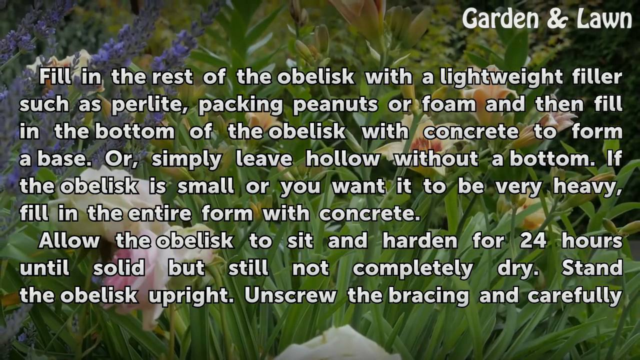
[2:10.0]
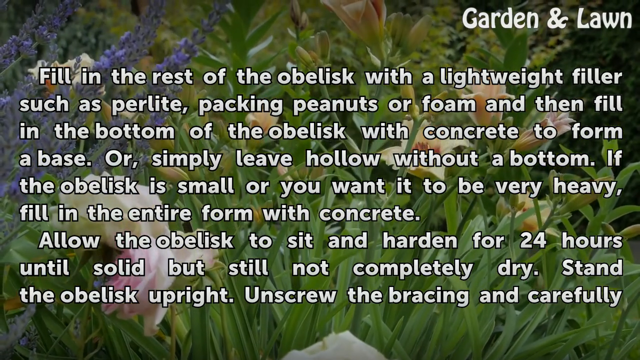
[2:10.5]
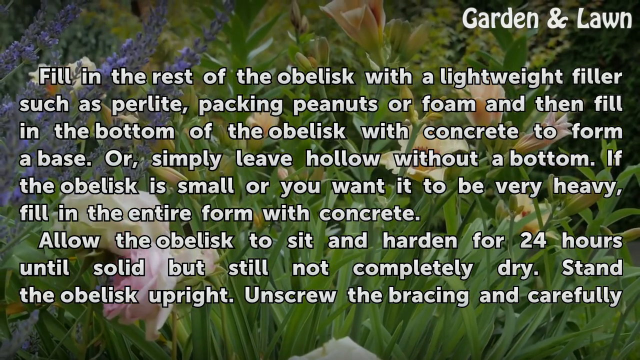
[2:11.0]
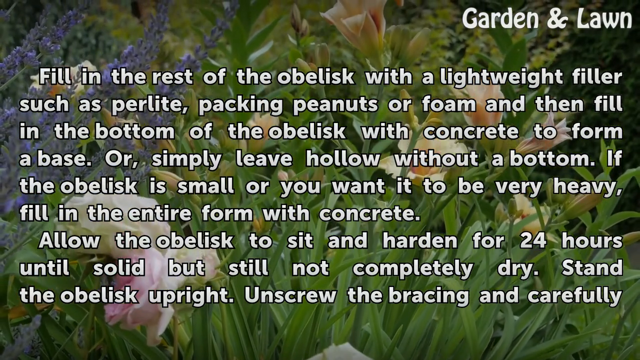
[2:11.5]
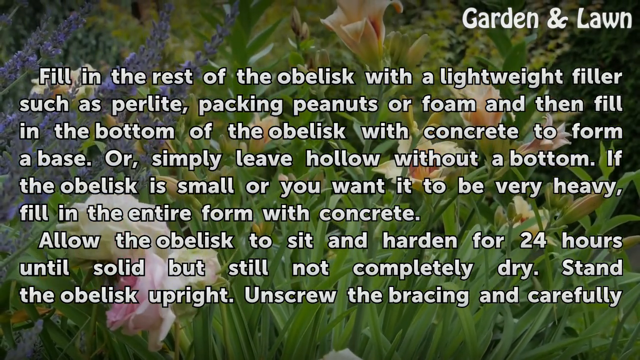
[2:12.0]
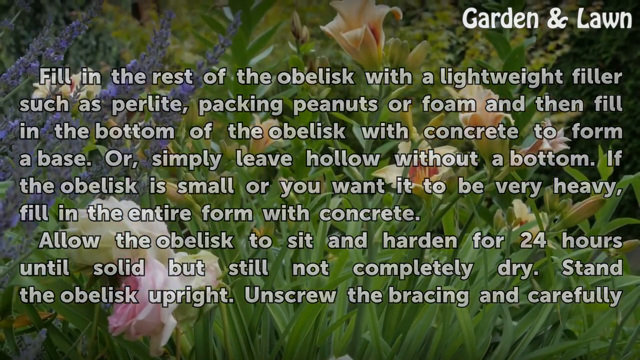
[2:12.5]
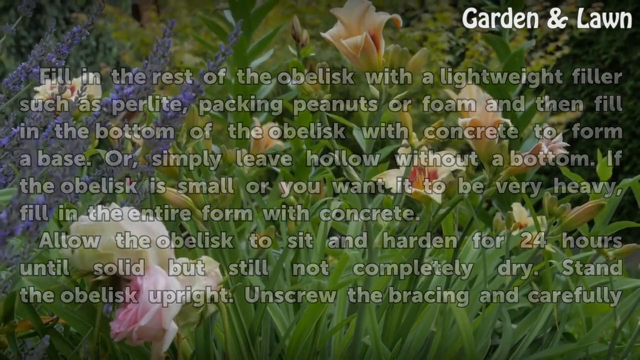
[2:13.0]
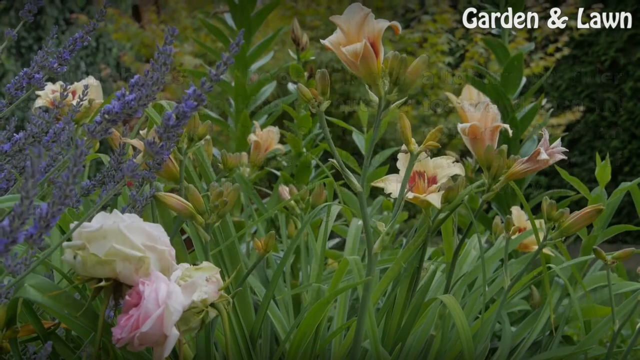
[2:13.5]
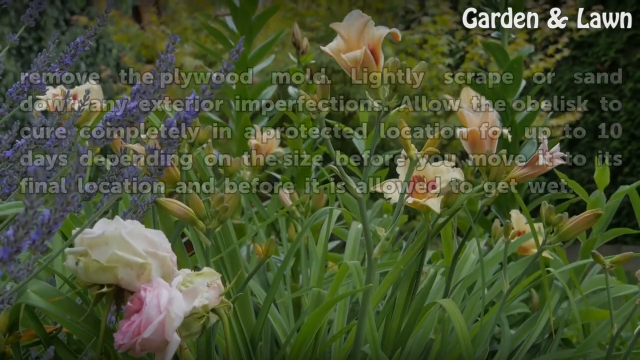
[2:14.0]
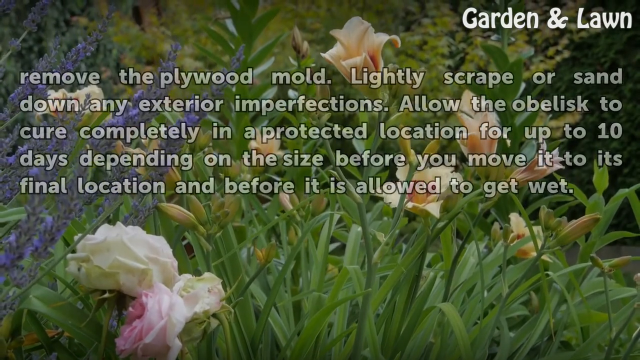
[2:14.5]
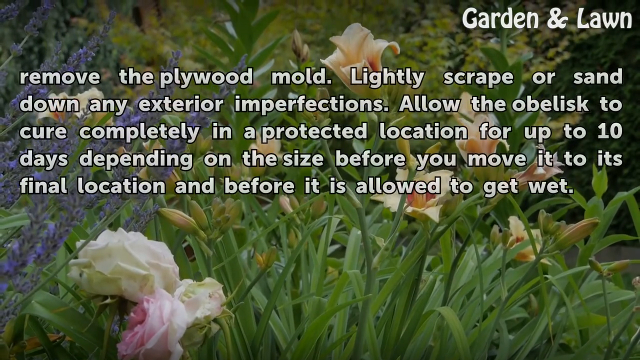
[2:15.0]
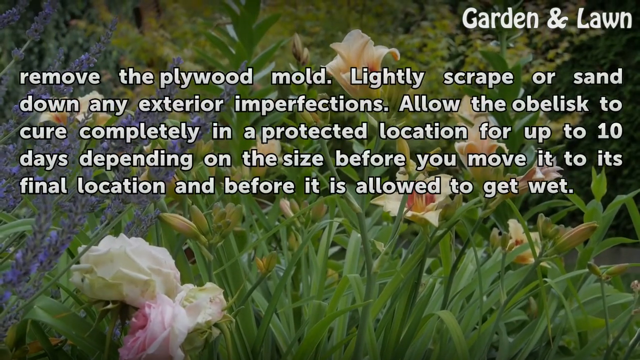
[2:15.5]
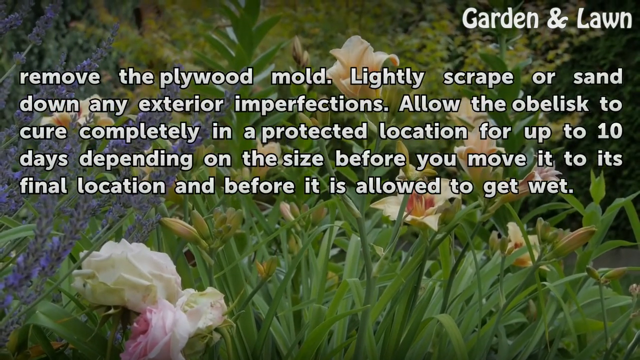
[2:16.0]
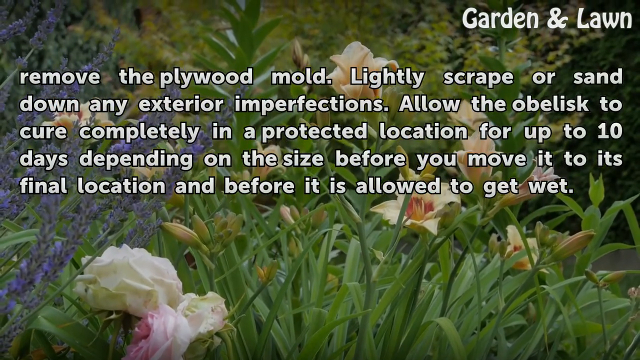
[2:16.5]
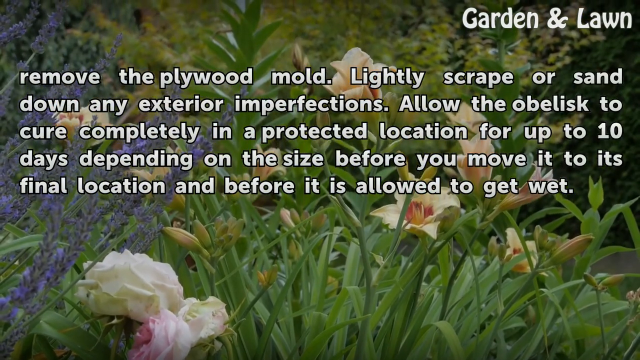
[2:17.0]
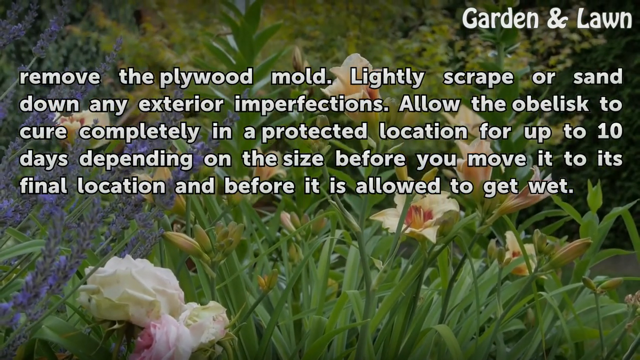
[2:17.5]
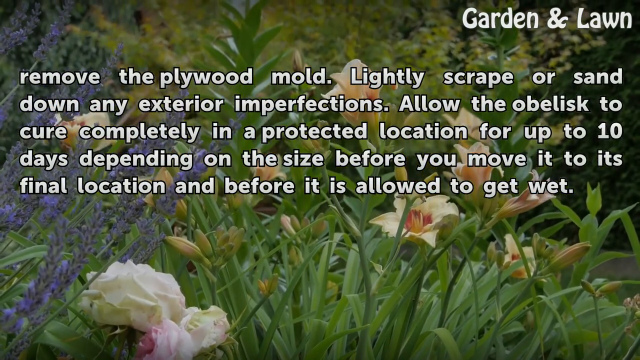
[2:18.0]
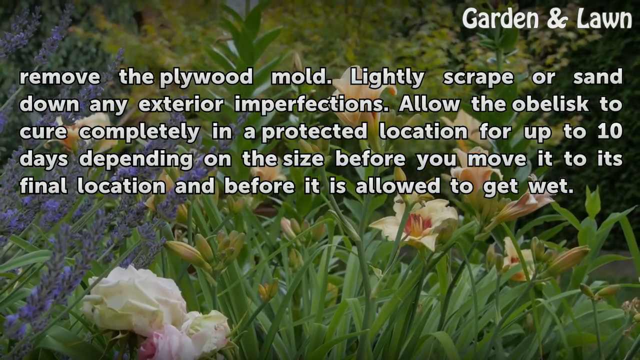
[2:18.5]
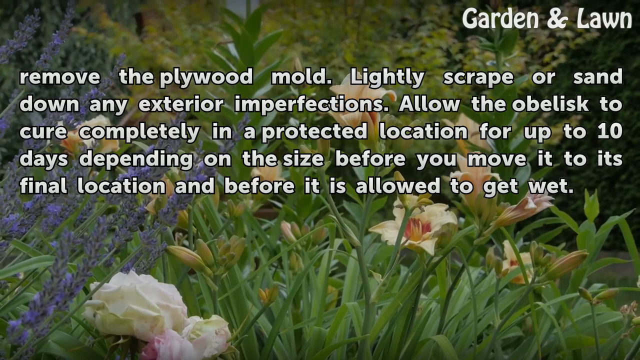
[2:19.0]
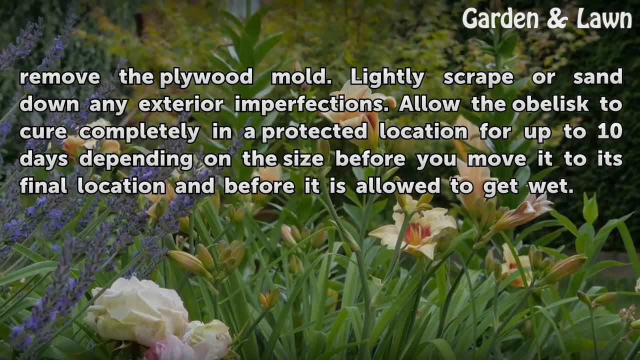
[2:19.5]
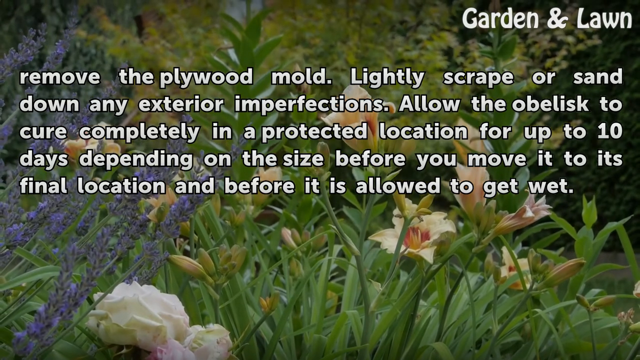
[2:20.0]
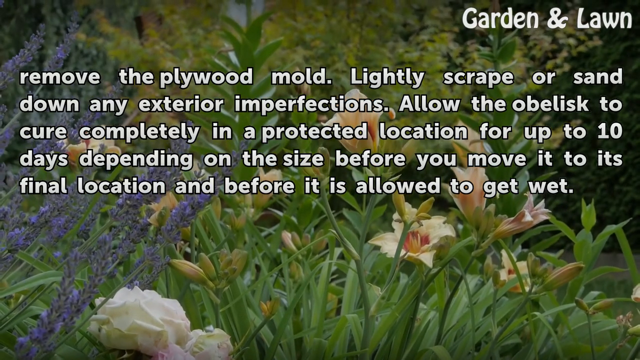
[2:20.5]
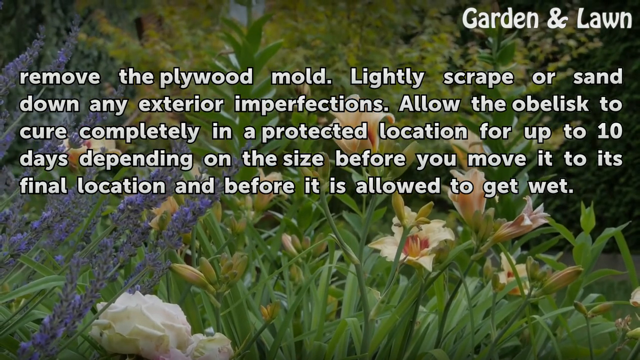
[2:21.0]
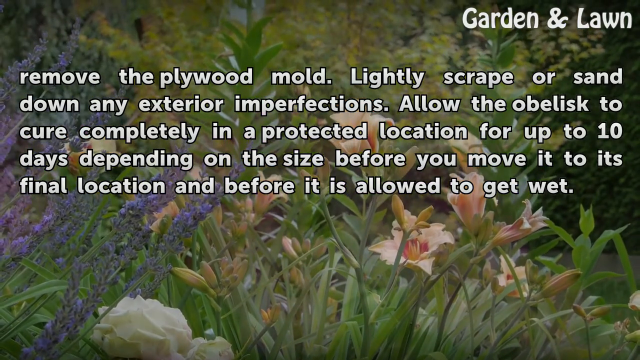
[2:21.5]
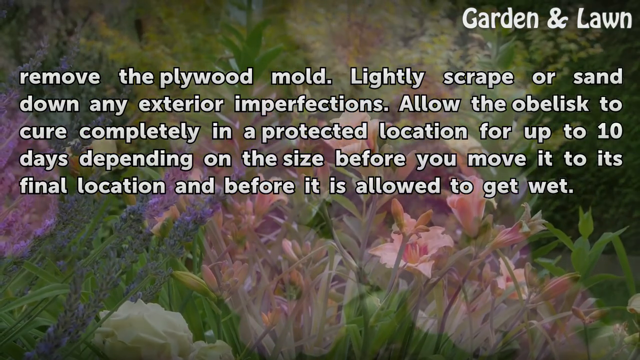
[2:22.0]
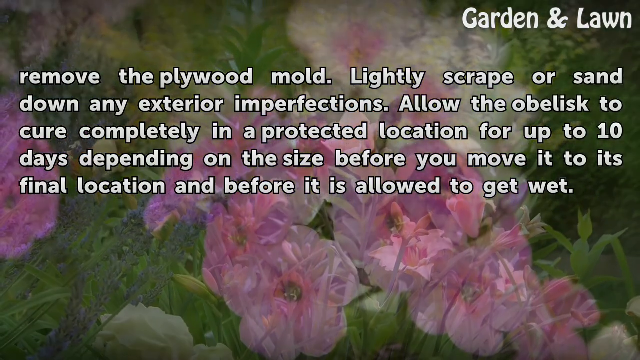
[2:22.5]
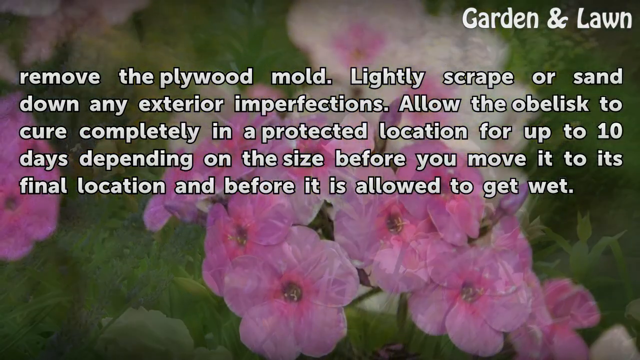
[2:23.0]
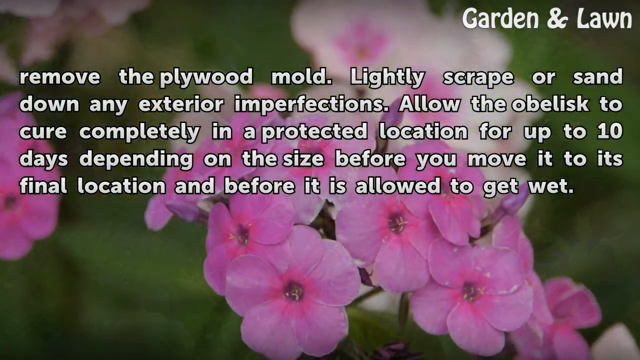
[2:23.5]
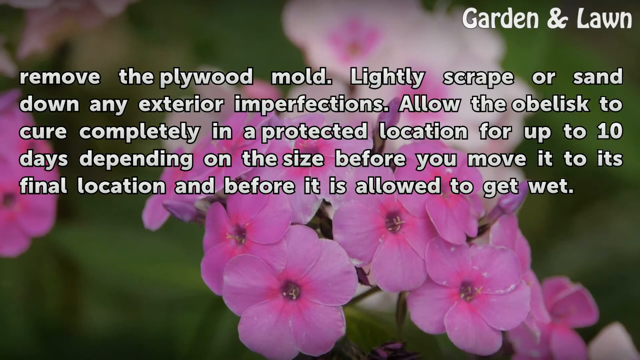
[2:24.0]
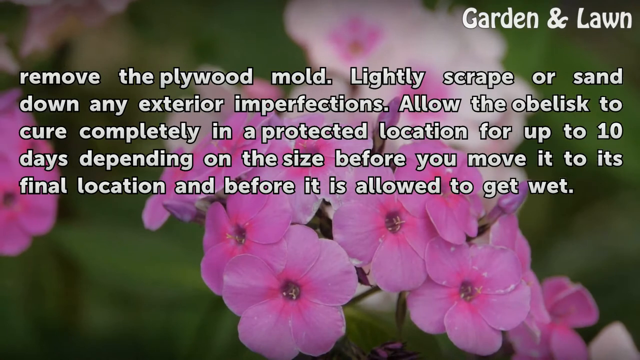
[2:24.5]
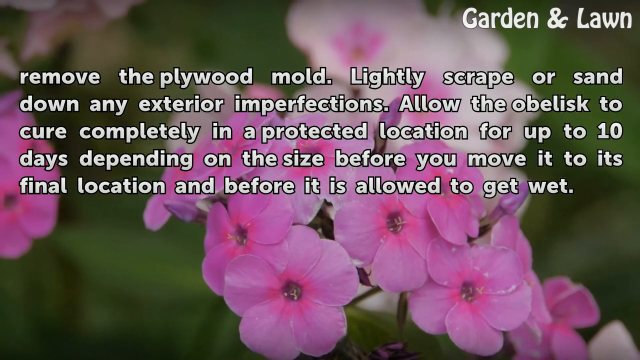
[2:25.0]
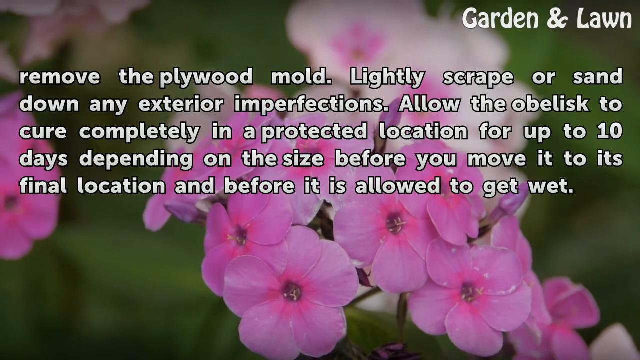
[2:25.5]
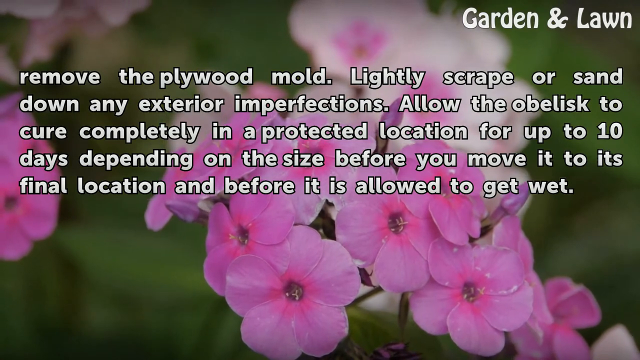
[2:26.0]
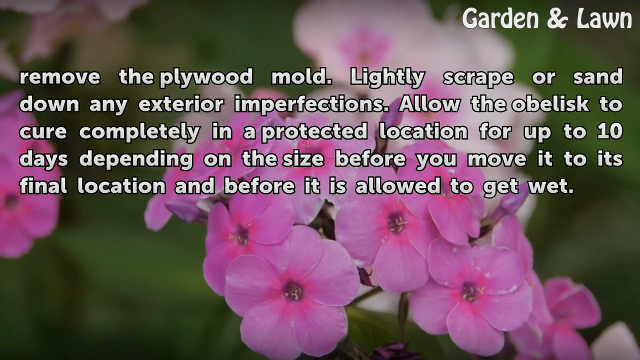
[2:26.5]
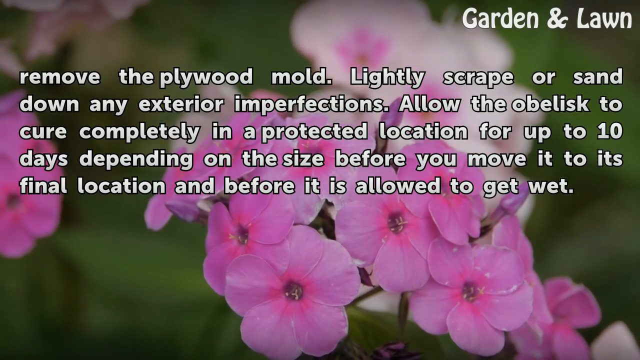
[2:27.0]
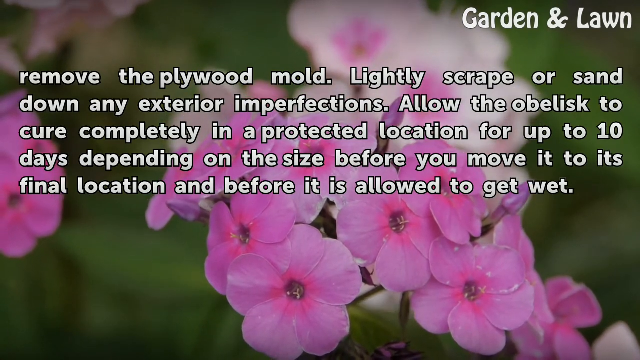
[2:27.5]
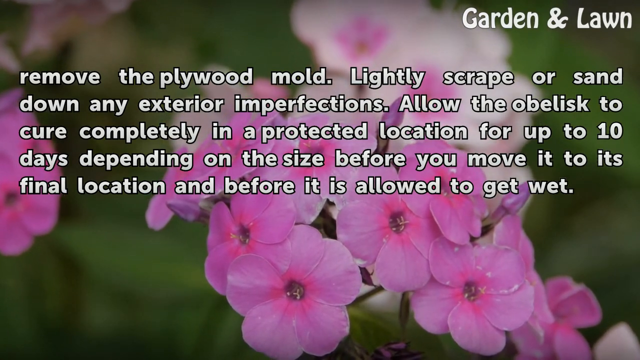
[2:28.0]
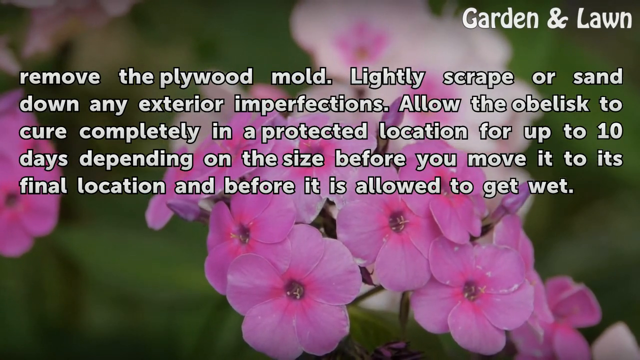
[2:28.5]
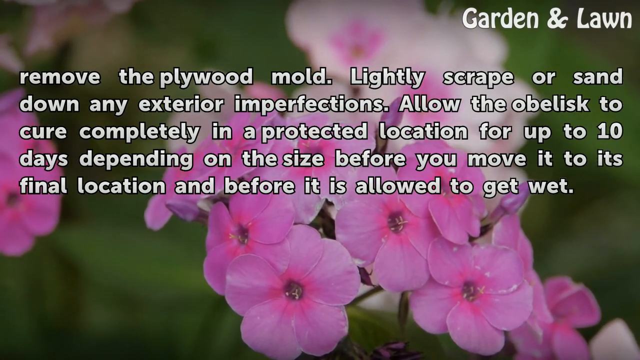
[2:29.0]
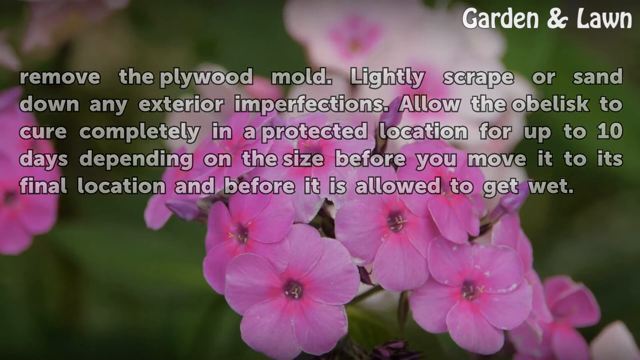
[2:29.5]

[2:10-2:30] The instructions continue in white font over a slowly moving, slowly changing floral background. The white text "Garden & Lawn" is in the upper right corner, and the centered white text with black edges reads "Remove the plywood mold. Lightly scrape or sand down any exterior imperfections. Allow the obelisk to cure completely in a protected location for up to 10 days, depending on the size, before you move it to its final location and before it is allowed to get wet." The background transitions from white-petaled flowers in a sea of green foliage to very delicate, smaller pink-petaled flowers against an out-of-focus green background showing leaves, stems, and dark, open spaces.